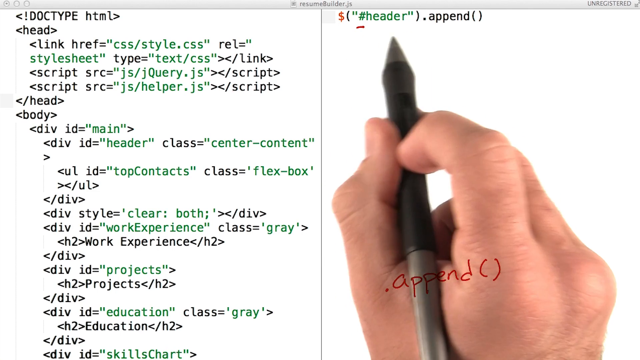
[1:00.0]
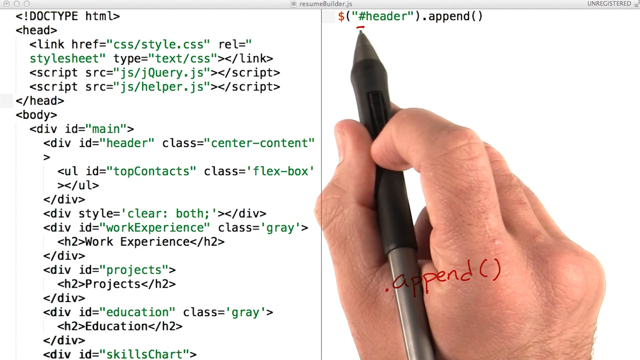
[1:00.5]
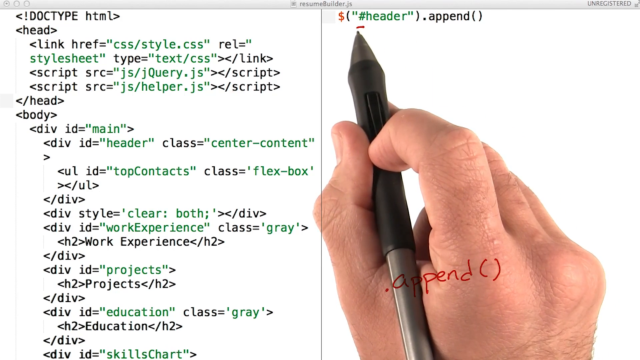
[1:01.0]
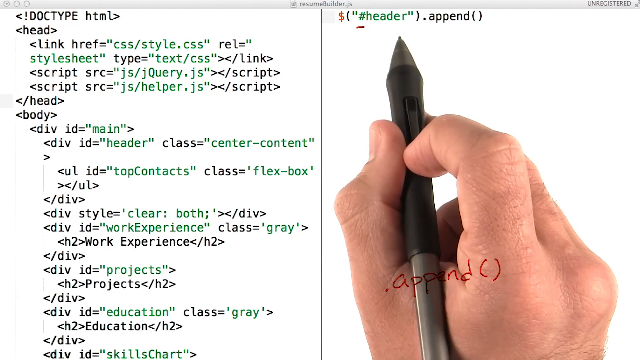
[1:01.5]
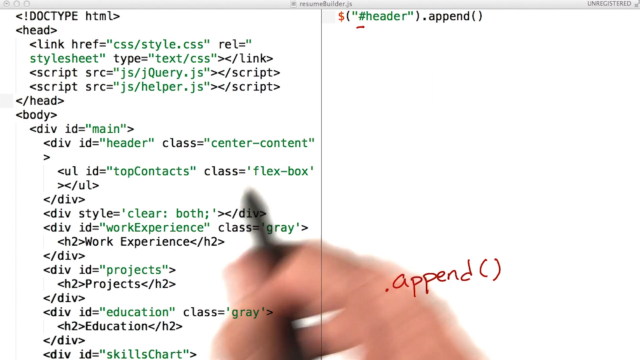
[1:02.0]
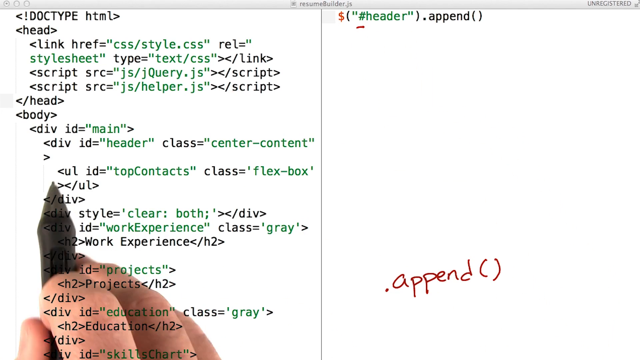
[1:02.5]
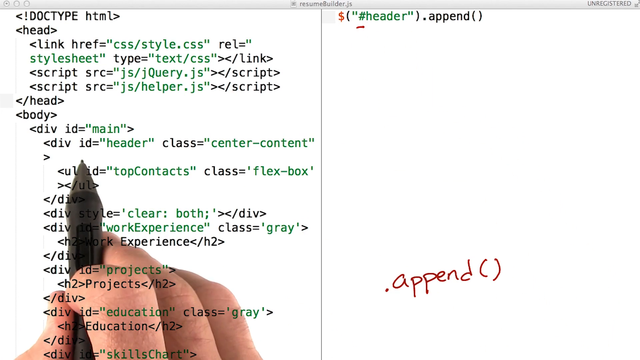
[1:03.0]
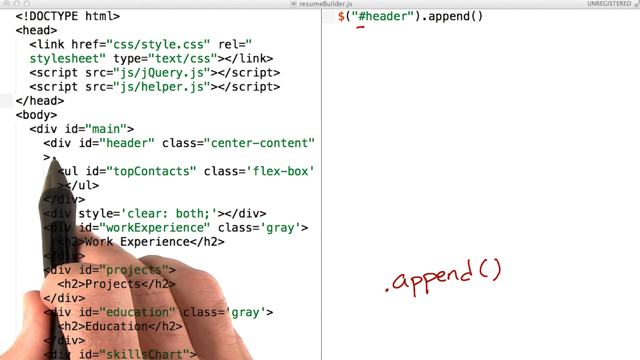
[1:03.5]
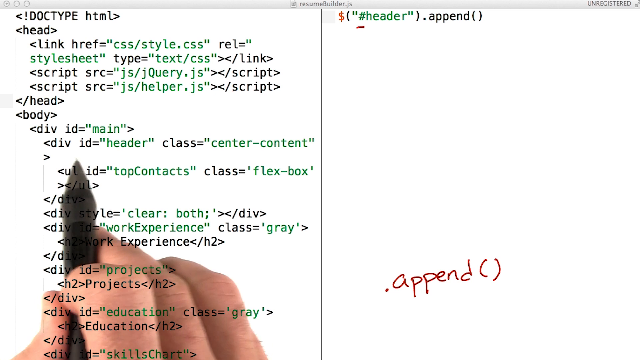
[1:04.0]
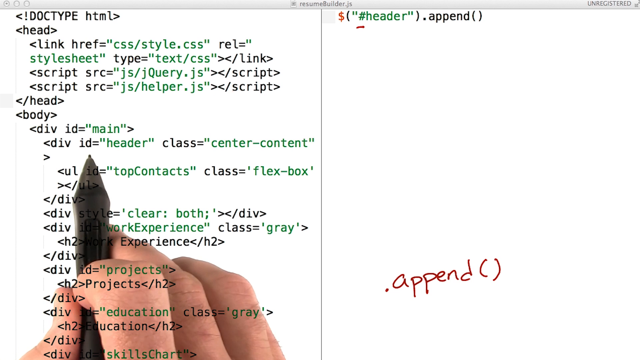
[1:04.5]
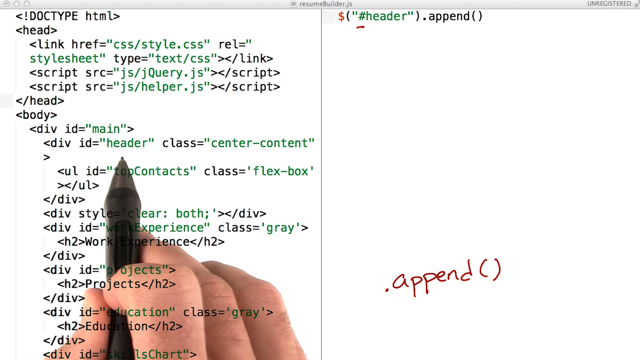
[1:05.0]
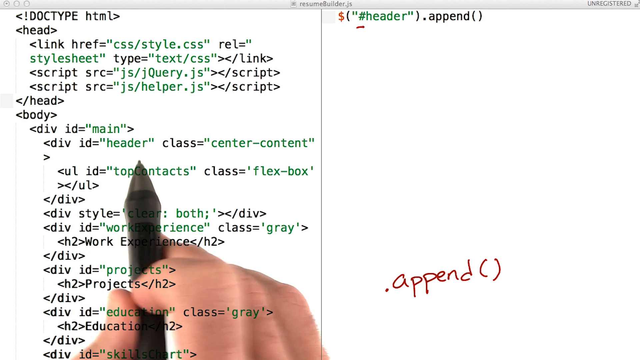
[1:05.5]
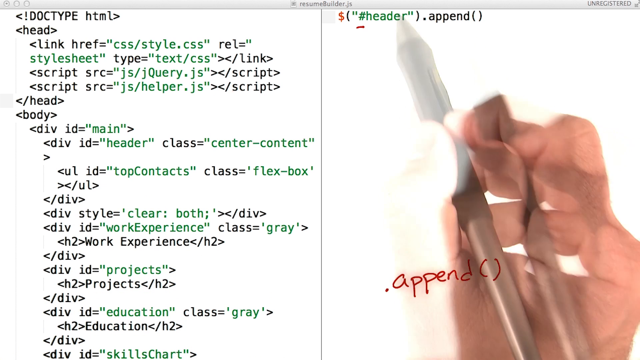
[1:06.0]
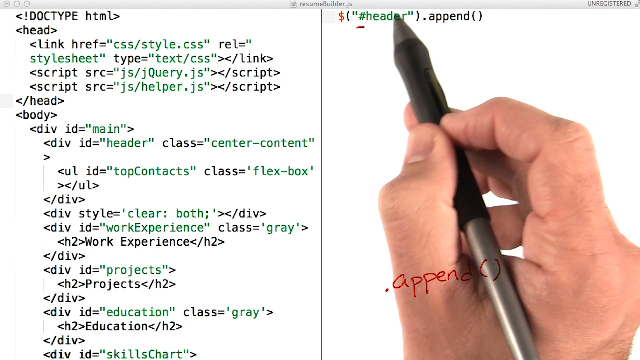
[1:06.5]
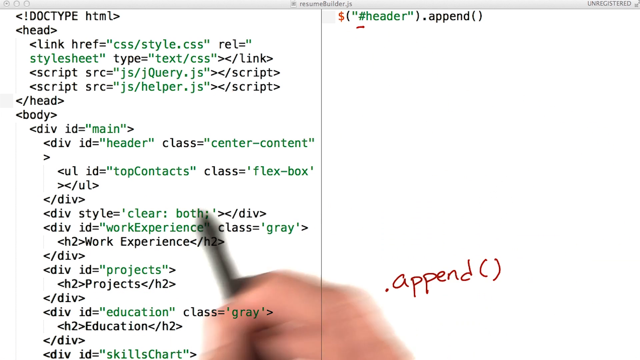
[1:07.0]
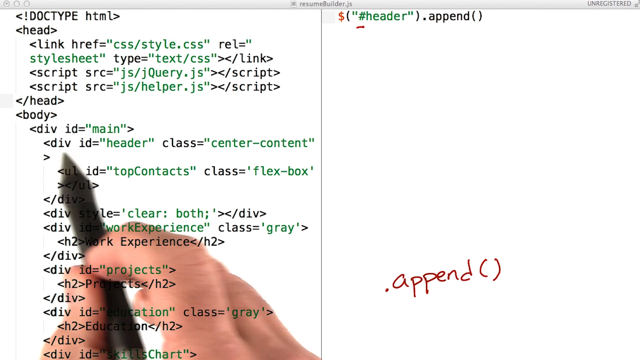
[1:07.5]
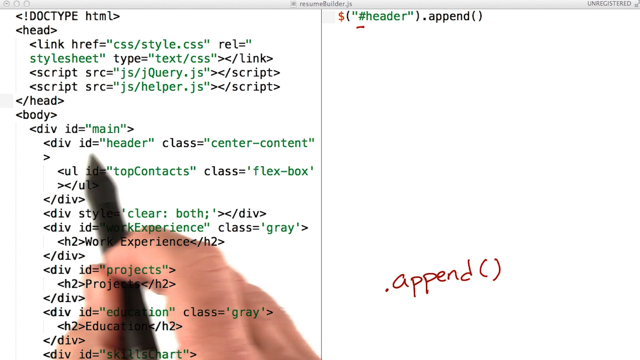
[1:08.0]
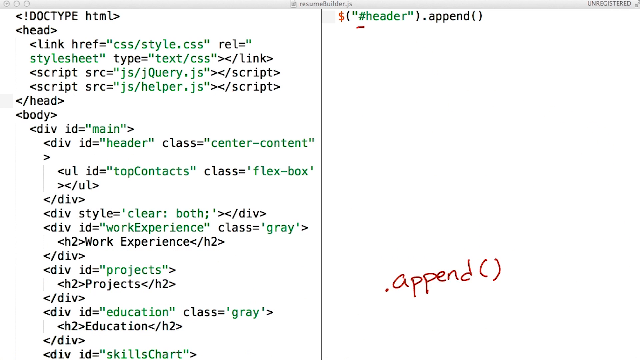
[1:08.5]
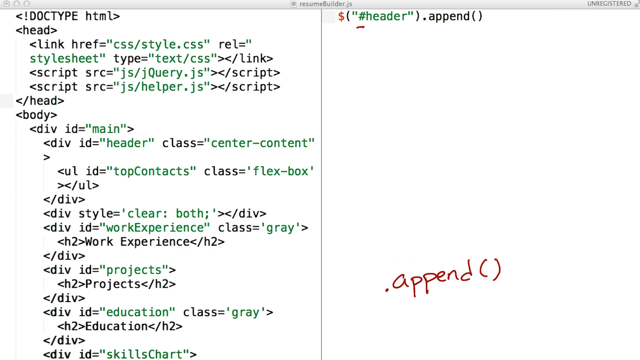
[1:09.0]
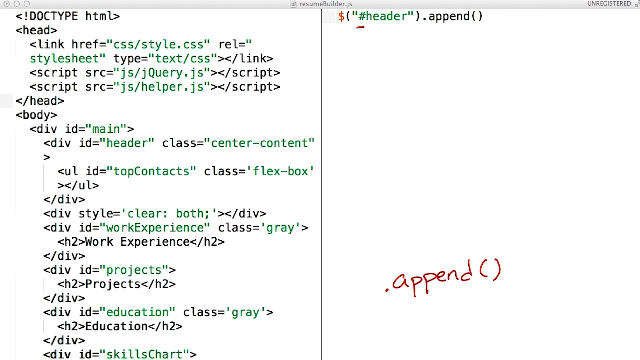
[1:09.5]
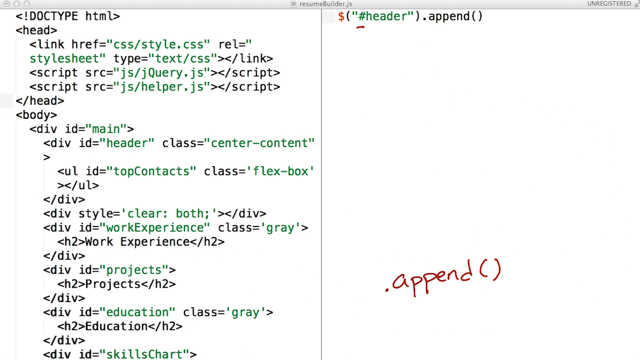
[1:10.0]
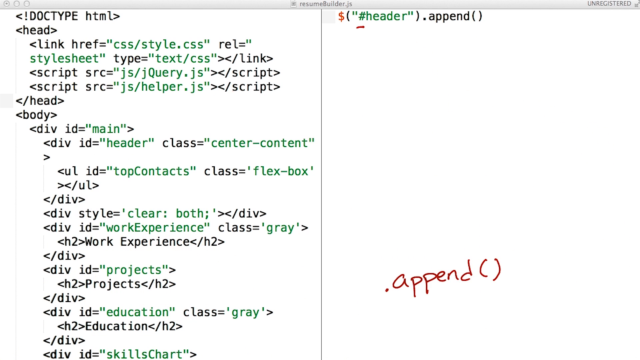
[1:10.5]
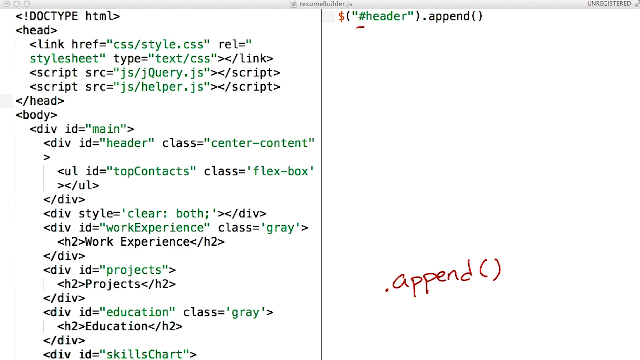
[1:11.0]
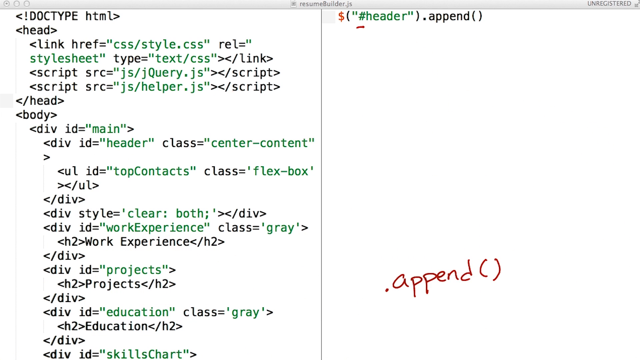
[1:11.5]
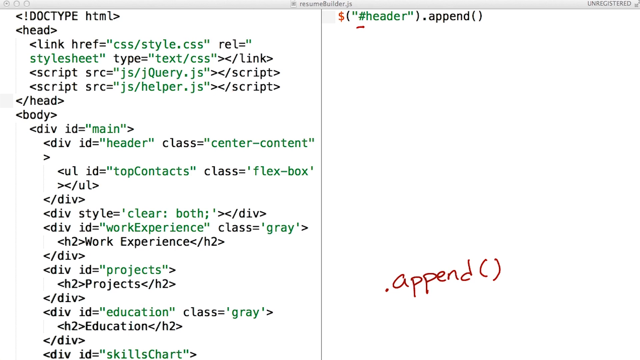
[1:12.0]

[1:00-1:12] Items such as the header, "class center" and the context are shown being moved to the next page. The headers at the top are shifted the same way: they are highlighted on the page full of words and moved over to the other page that has been opened next to it, a cleaner page.